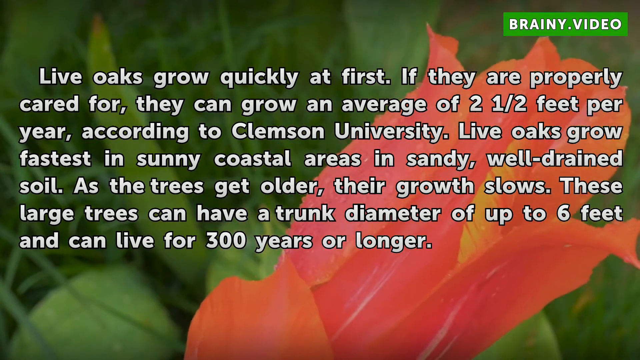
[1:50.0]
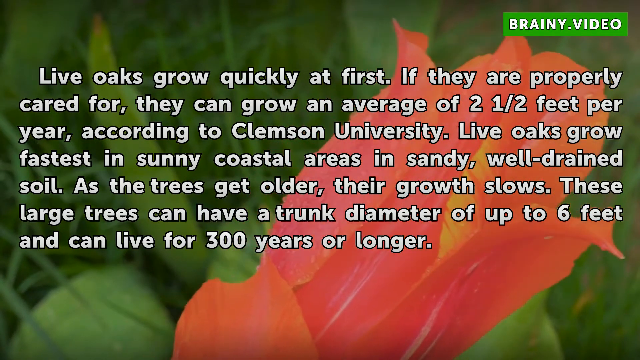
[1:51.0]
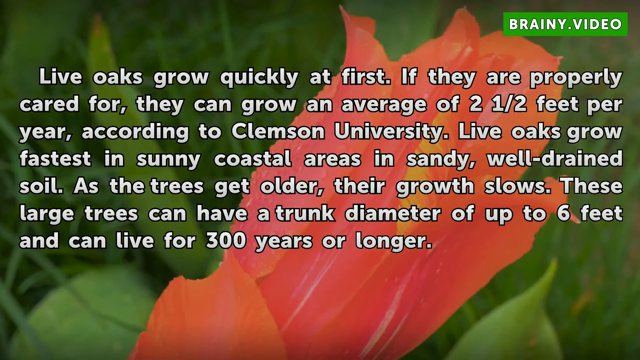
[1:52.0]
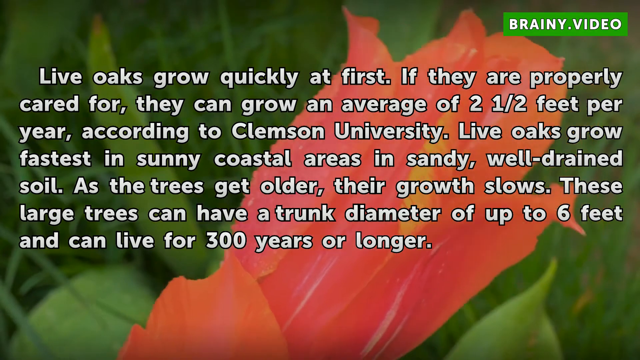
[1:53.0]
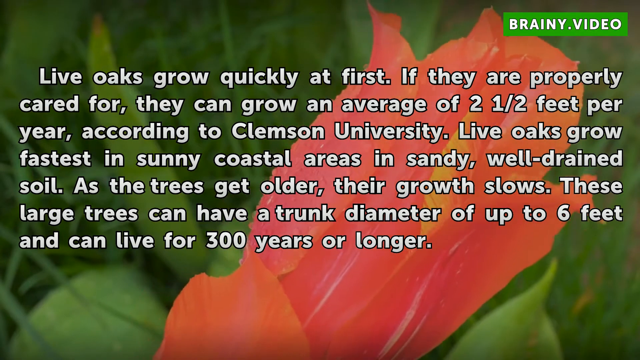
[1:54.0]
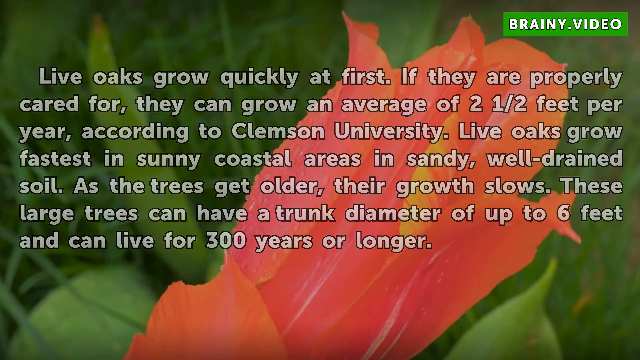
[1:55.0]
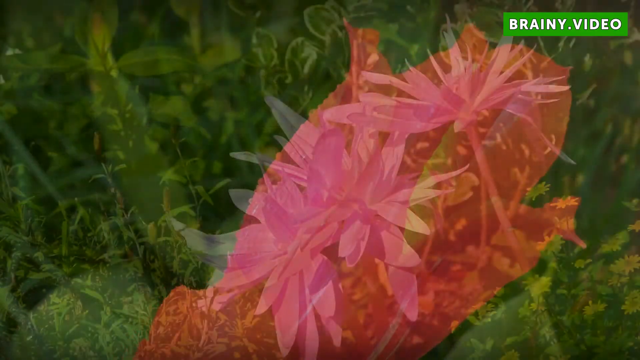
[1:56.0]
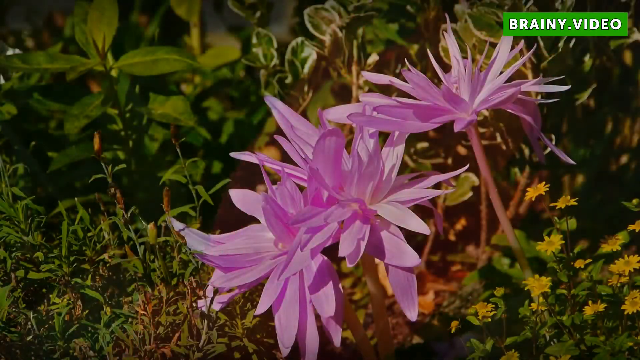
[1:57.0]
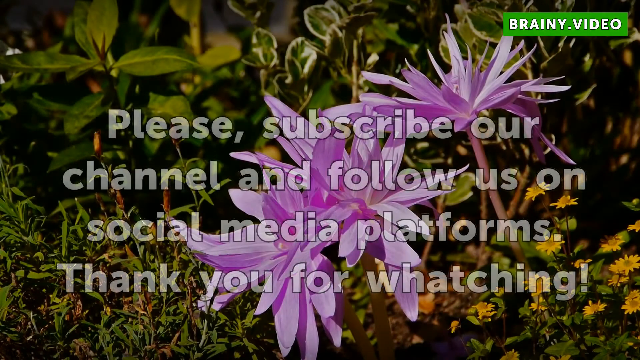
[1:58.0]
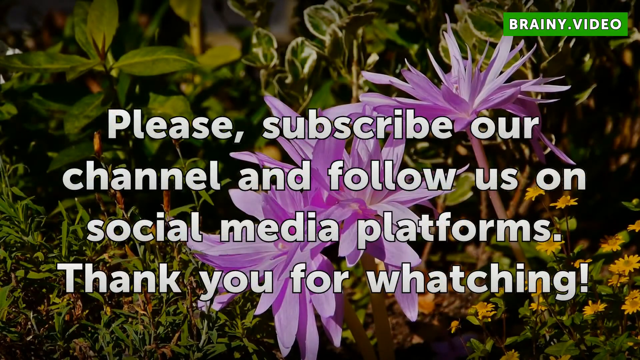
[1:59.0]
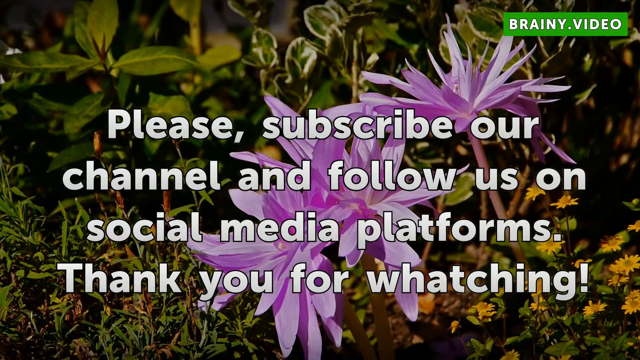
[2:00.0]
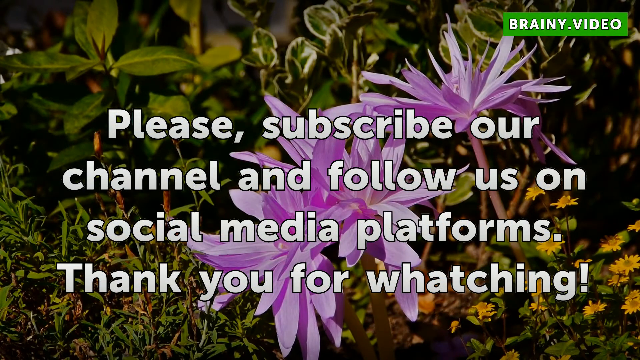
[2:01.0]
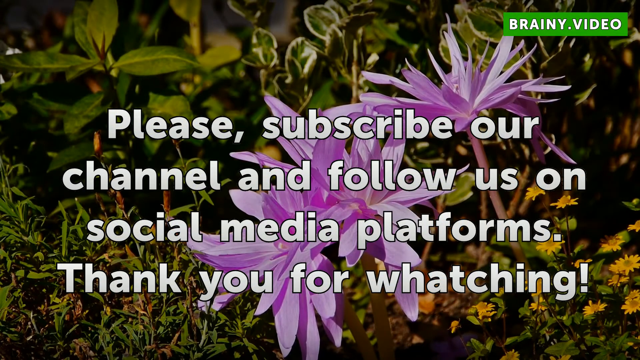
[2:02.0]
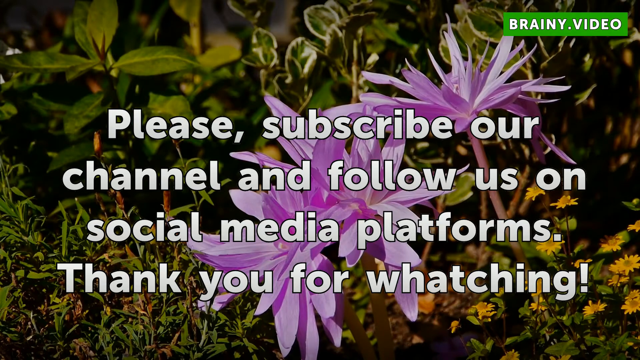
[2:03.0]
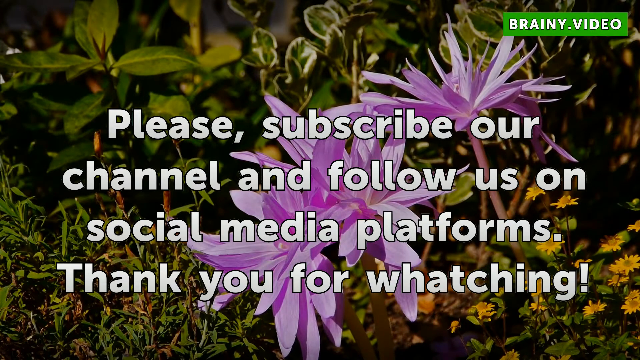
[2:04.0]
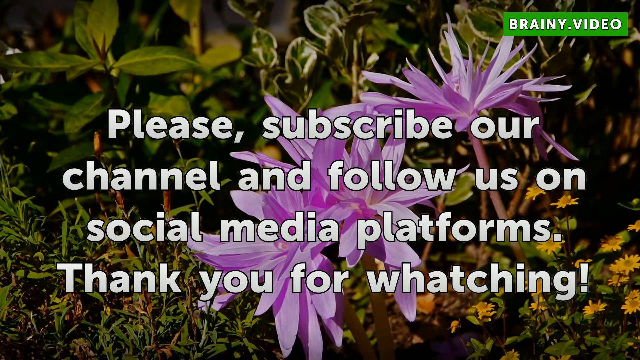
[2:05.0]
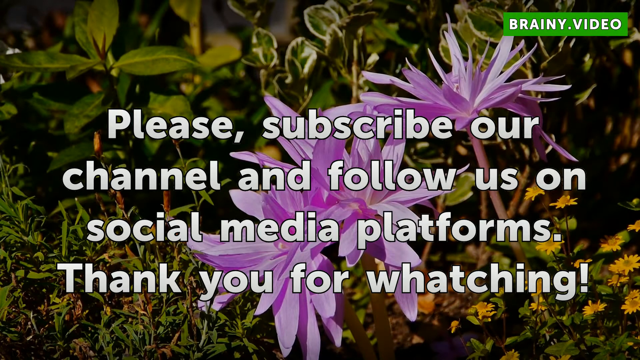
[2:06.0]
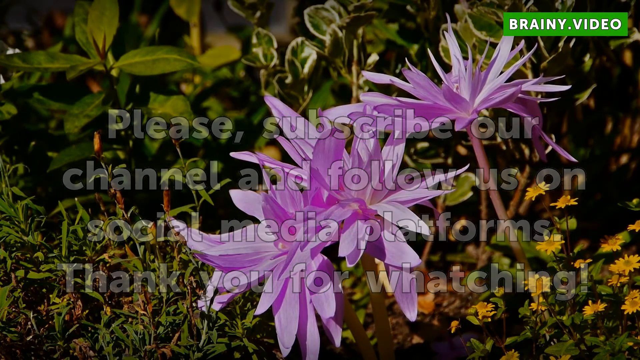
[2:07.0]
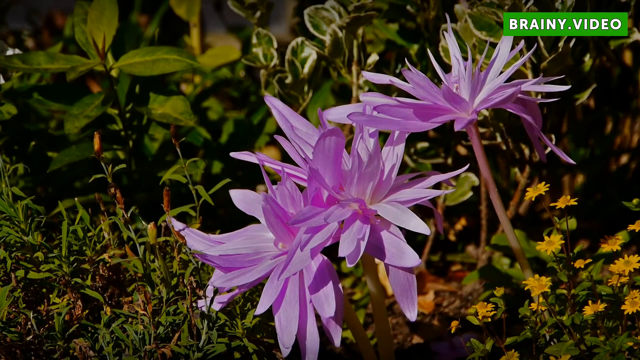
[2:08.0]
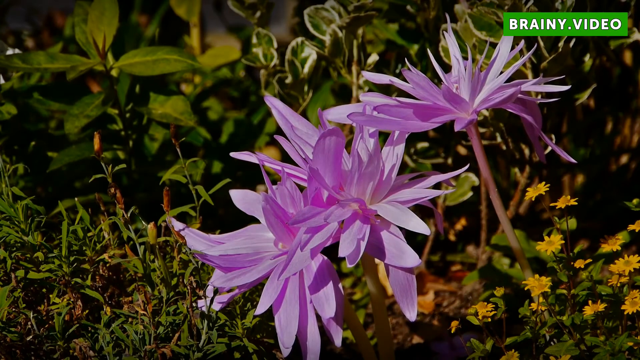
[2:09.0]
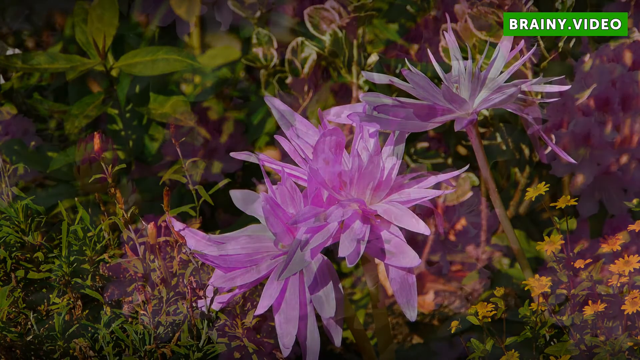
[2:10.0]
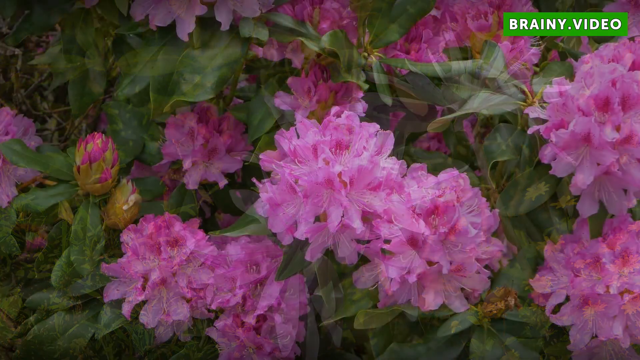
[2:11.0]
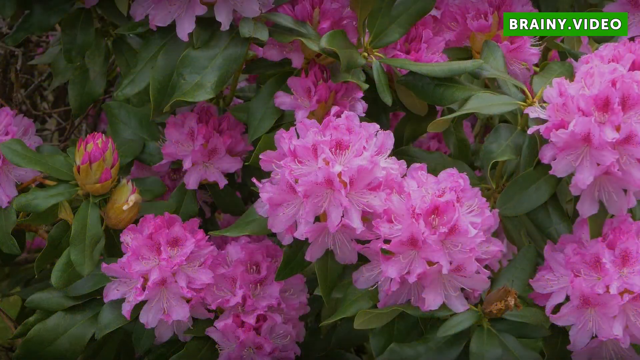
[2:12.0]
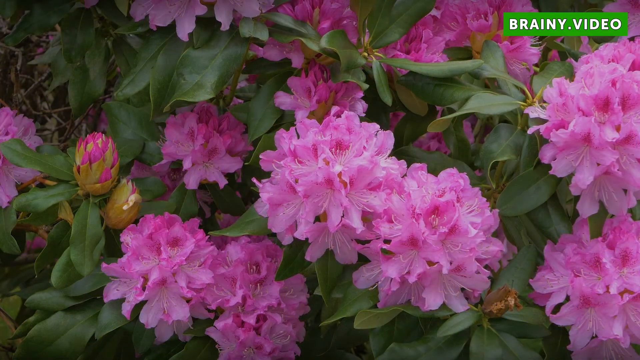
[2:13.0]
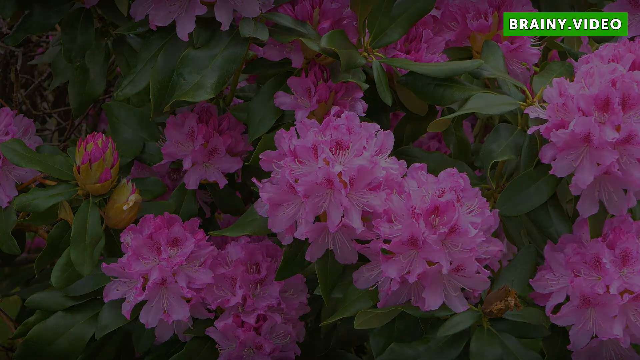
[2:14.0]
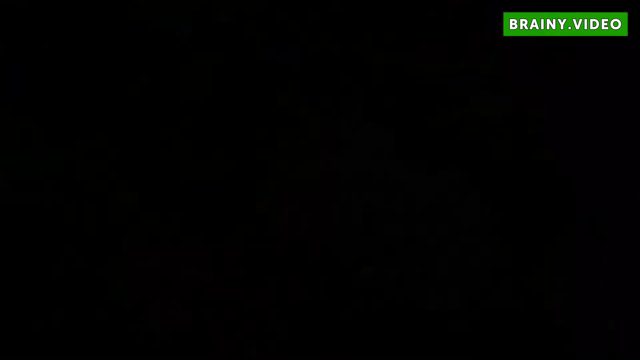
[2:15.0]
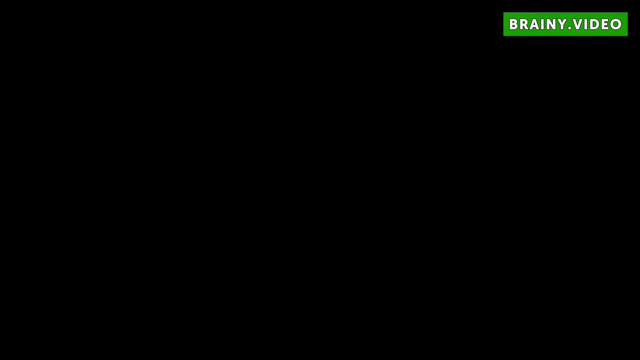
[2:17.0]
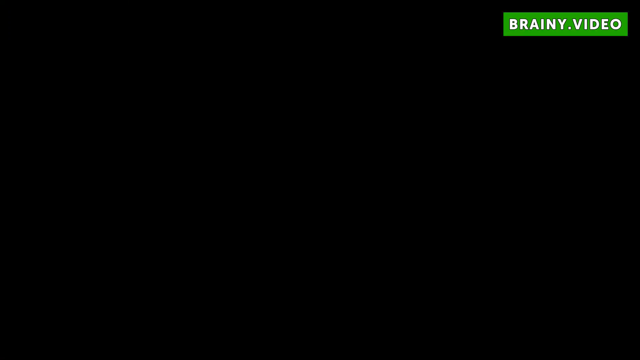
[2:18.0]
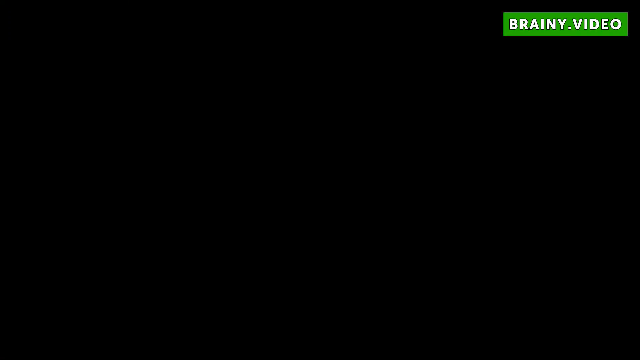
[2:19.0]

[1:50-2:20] The red flower continues moving in the background. The background picture then changes to a small group of light purple flowers, with green plants with green leaves behind them, green grass at the bottom, especially on the lower left, and yellow flowers on the lower right. Text appears up in the middle: "Please subscribe to our channel and follow us on social media platforms. Thank you for watching." The words disappear and the picture changes to more purple flowers among green-leaved plants. That picture disappears, and in the top-right corner a logo reads "Brainy Video" in white letters on a small green rectangle.